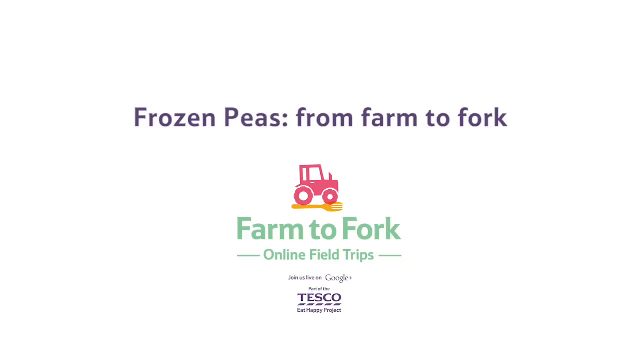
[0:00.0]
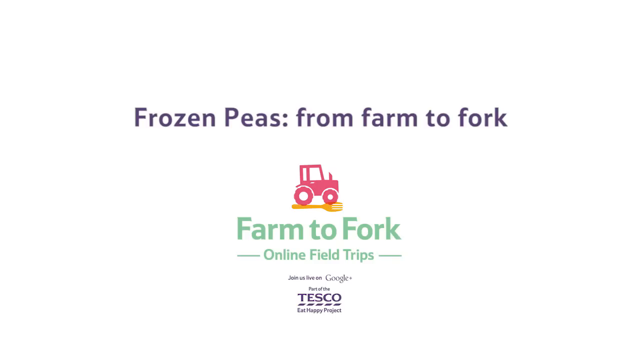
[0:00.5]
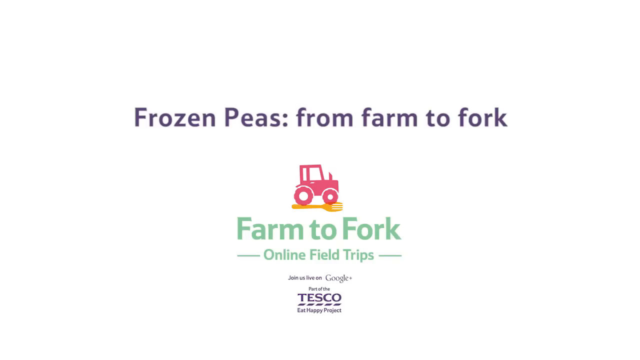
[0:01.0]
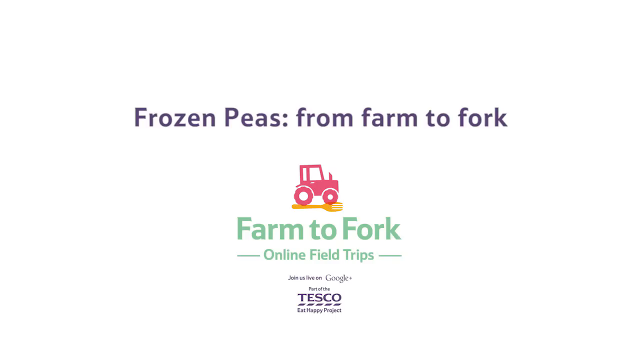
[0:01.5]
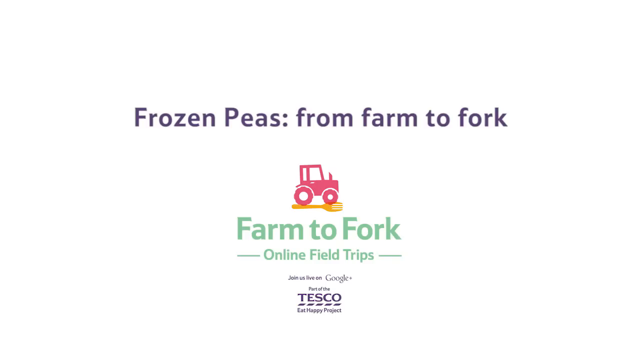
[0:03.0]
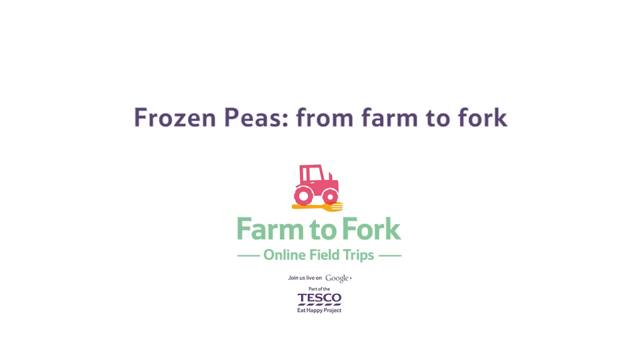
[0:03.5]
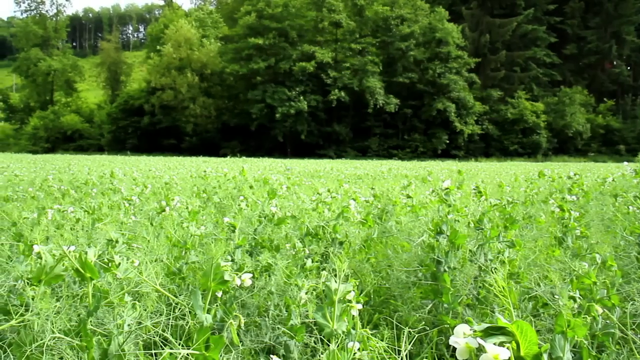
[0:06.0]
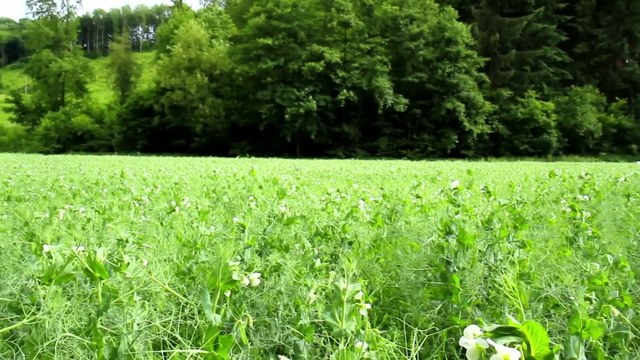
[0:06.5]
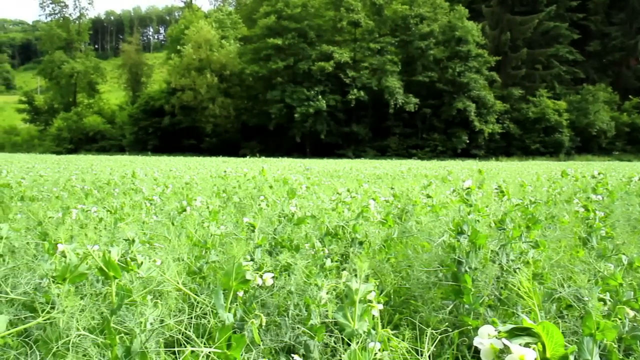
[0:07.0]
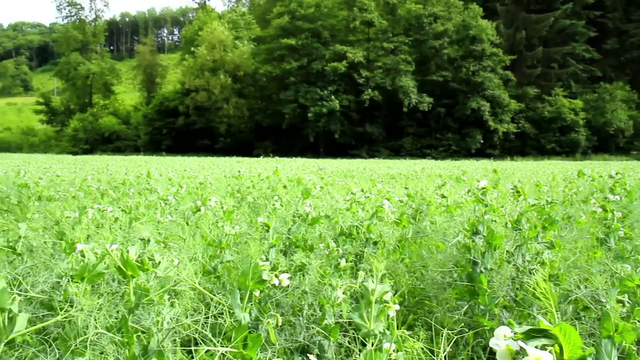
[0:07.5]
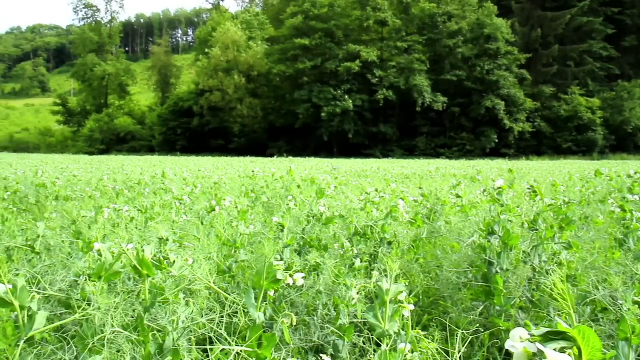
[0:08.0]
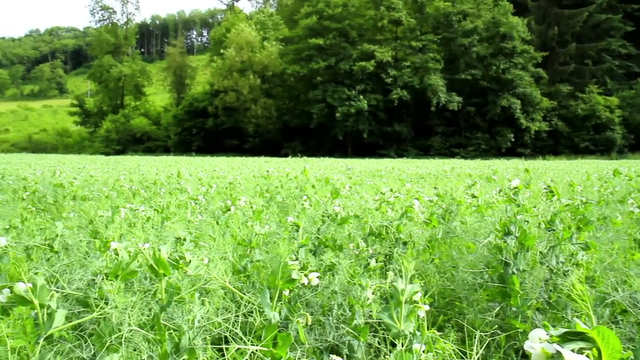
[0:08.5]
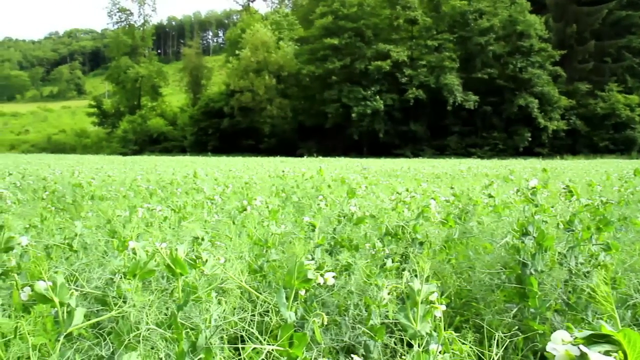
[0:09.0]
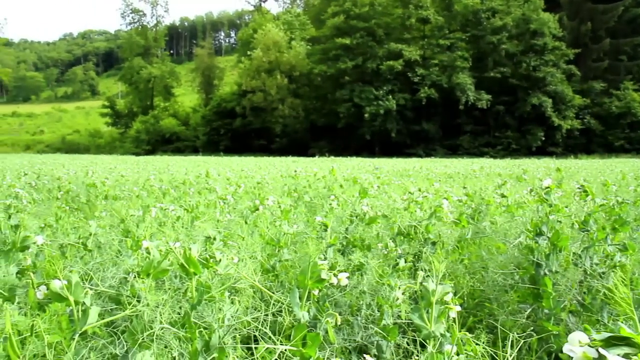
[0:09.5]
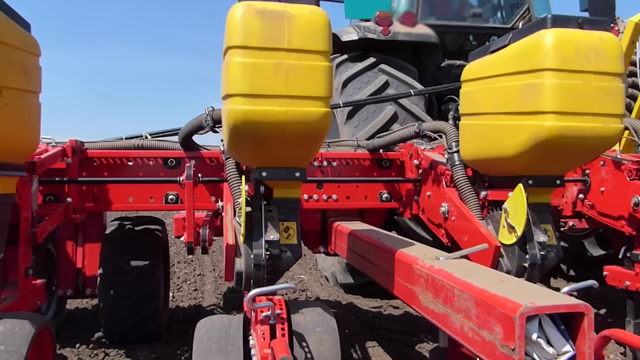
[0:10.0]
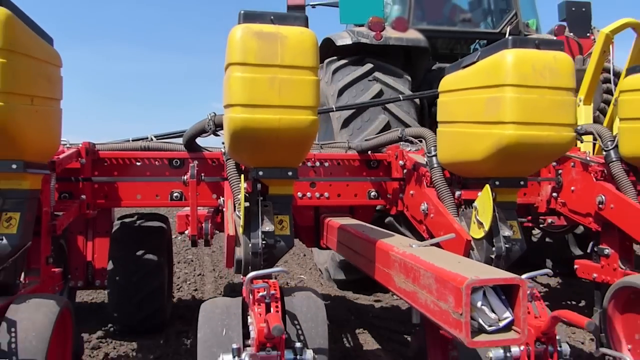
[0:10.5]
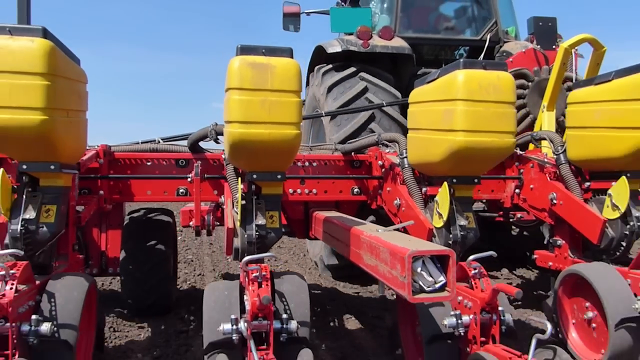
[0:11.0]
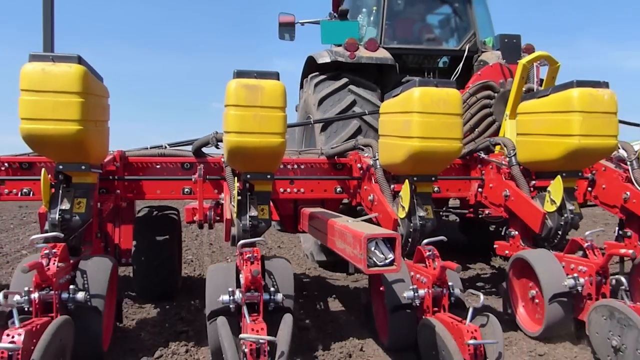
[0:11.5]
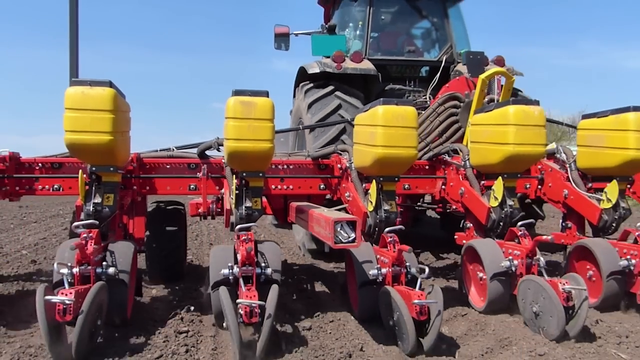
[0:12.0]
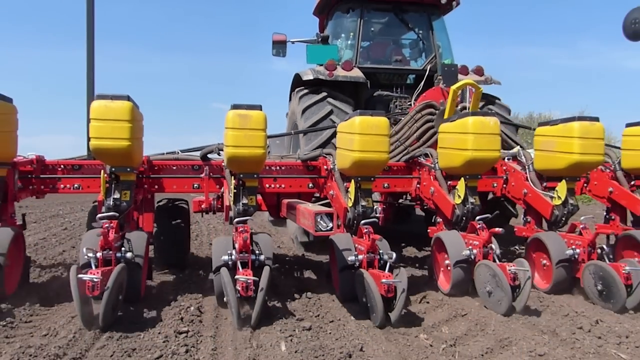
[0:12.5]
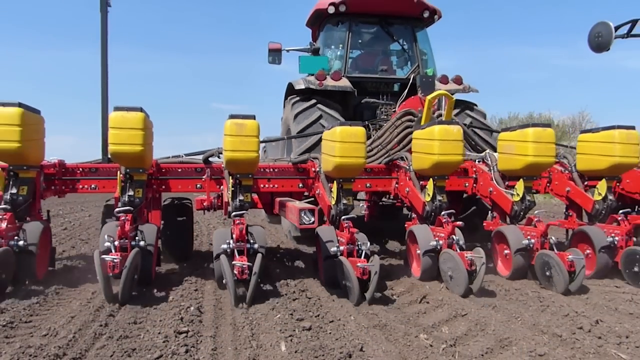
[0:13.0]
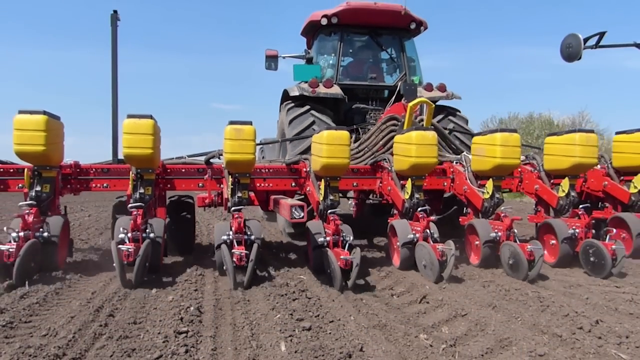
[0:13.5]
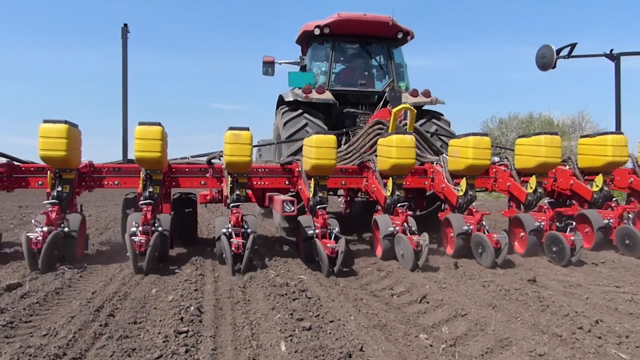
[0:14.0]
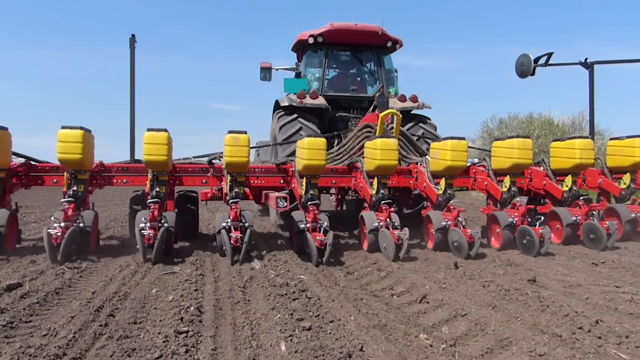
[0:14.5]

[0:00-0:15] The video opens with "frozen peas from farm to fork." A wide shot shows a field in what looks like daytime, and it appears very bright out; trees, hills and flowers are visible in the background. A quick shot follows of a combine, filmed from what looks like down close to the ground. The combine is attached to a tractor and has at least 10-12 different places for dropping seeds. It moves away from the camera, now in the dirt. Where the opening showed green fields, this part shows nothing but dirt ready to be planted. "Tesco" appears in the bottom right-hand corner.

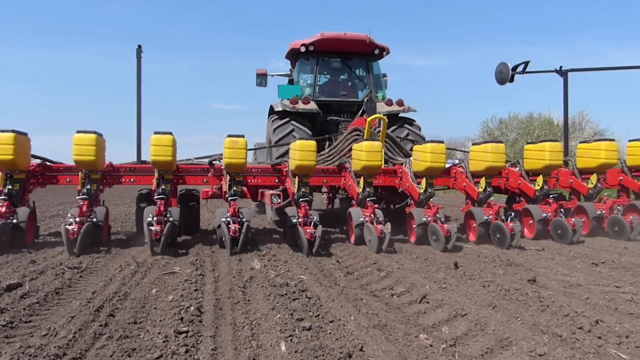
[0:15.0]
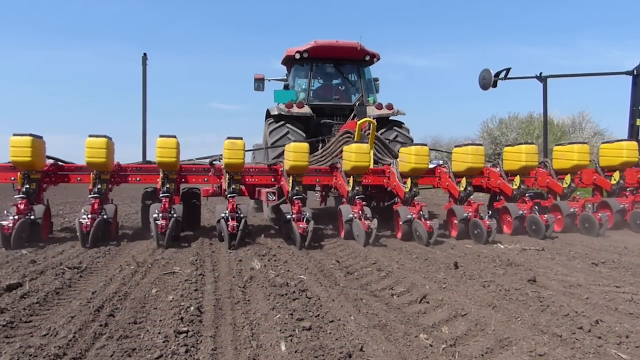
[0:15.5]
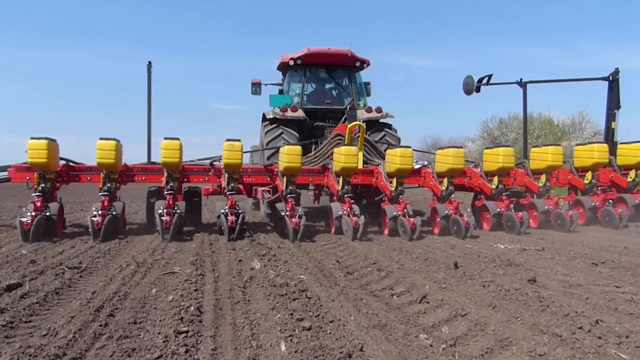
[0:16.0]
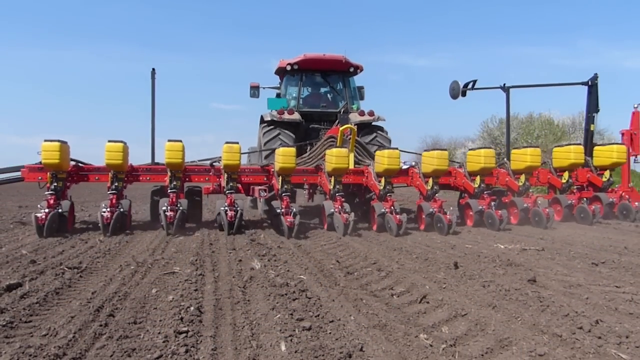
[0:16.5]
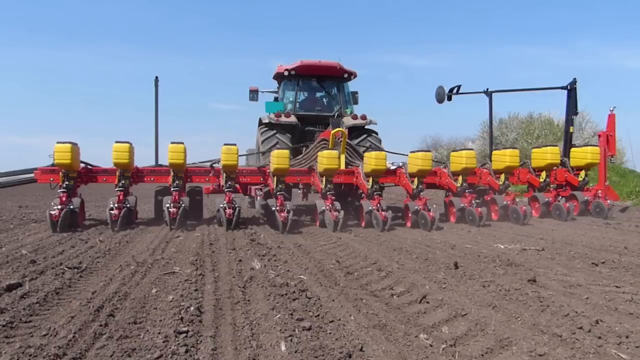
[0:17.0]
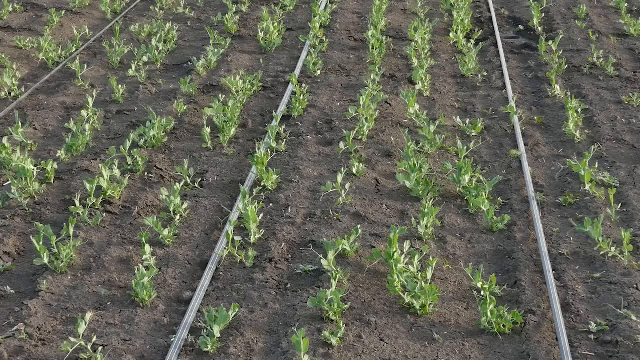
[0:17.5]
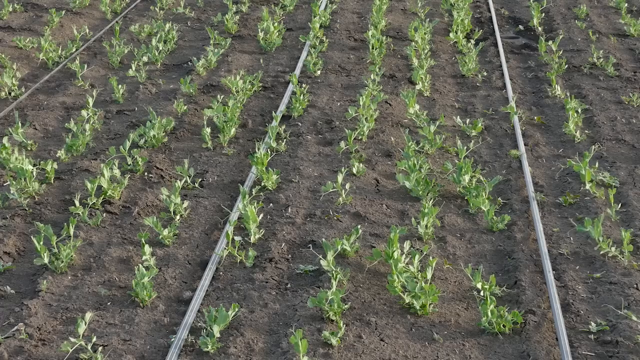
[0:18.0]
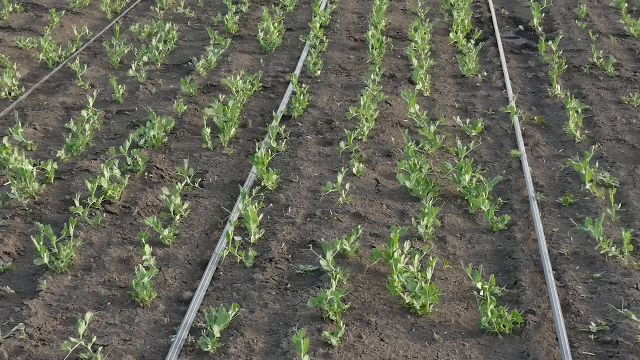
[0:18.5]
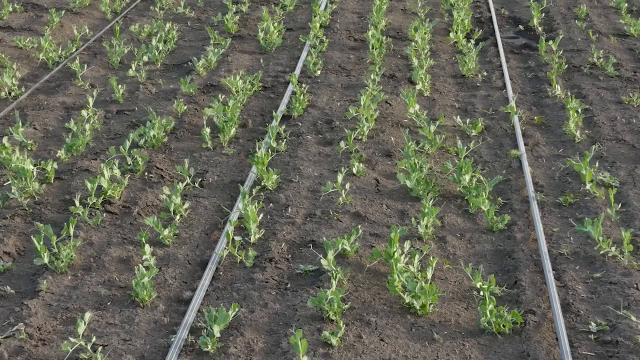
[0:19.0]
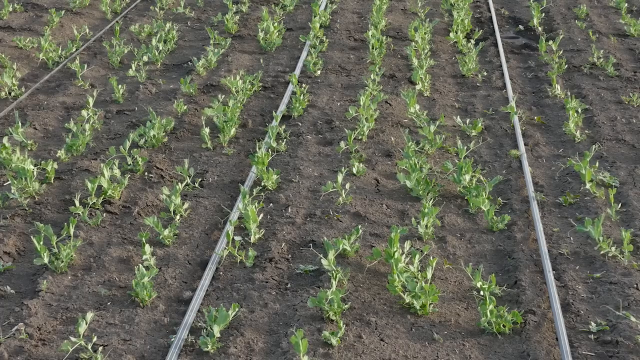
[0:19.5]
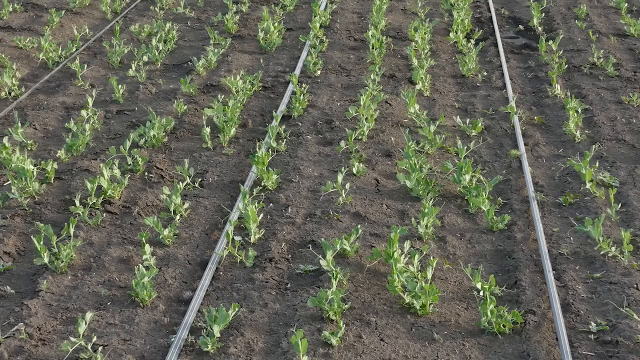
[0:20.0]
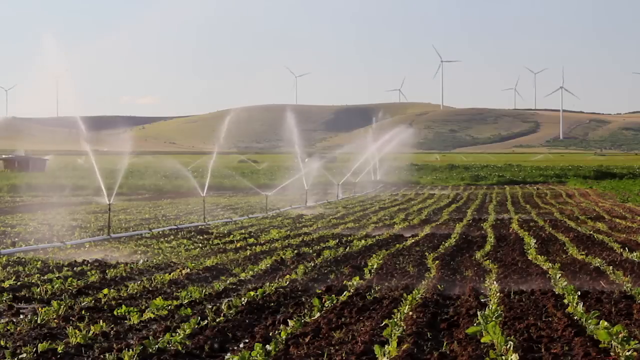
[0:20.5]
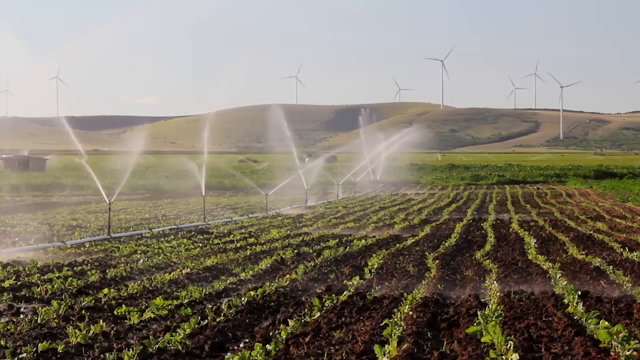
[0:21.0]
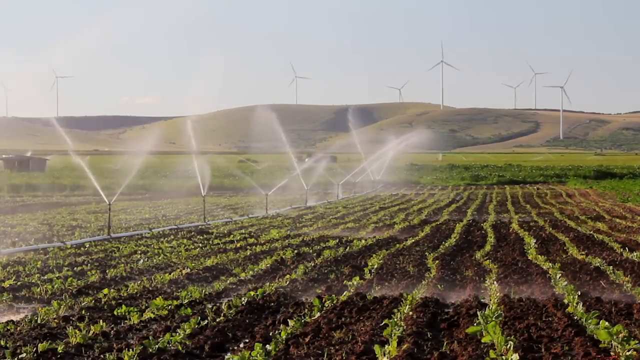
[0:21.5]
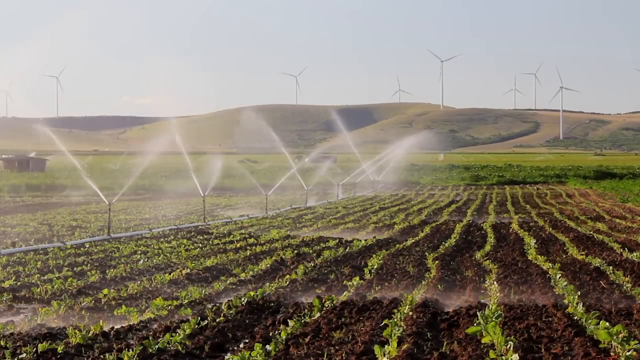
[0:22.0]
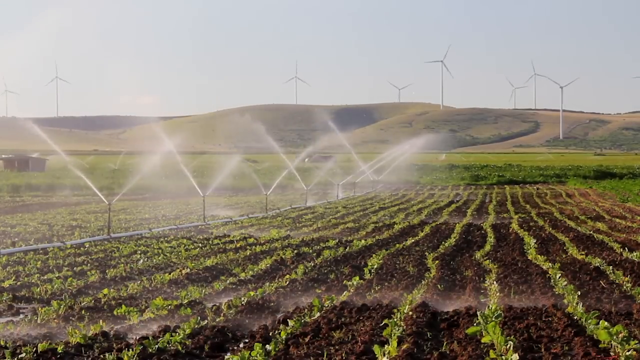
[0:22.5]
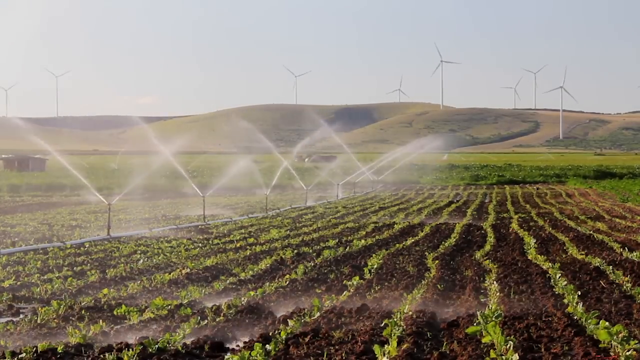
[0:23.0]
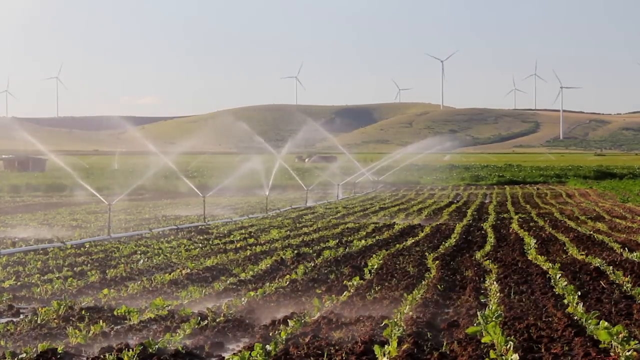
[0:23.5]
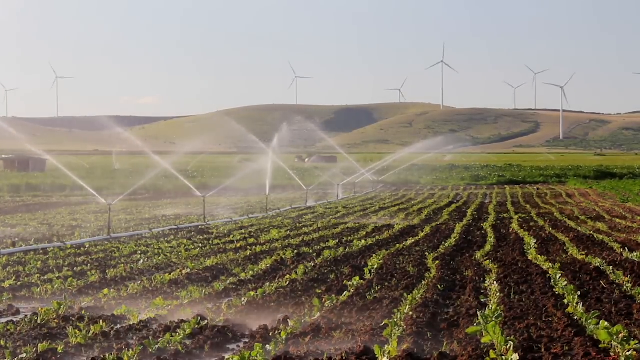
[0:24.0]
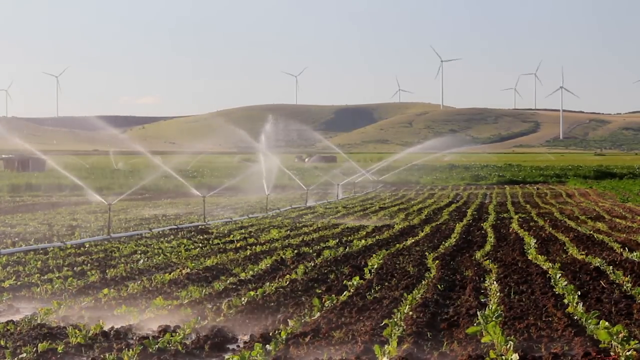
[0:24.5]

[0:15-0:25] The combine rolls away from the camera, planting seeds into ground that is nothing but dirt. A fast-forward sequence then shows the seeds sprouted, with rows and rows of pea plants. Next, above-ground watering systems spray water all over the seedlings in a very wide-angle shot, with mountains and hills in the background on a bright, sunny day. Six or seven windmills are turning. Then the combine is shown rolling away from the camera over nothing but dirt.